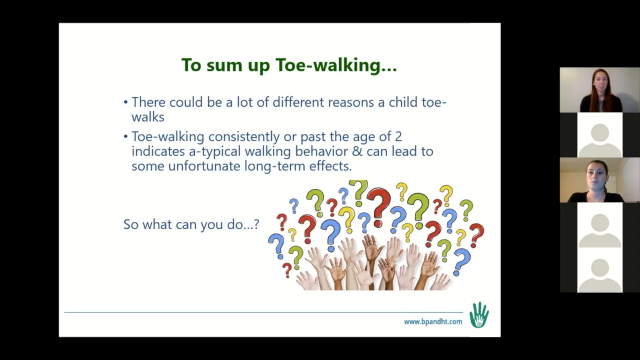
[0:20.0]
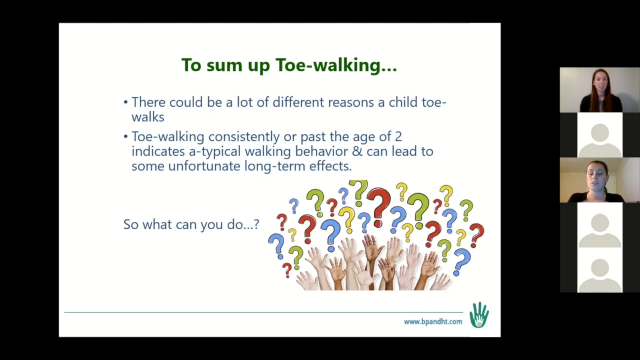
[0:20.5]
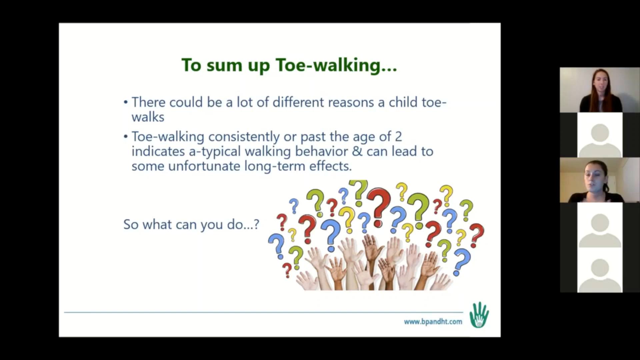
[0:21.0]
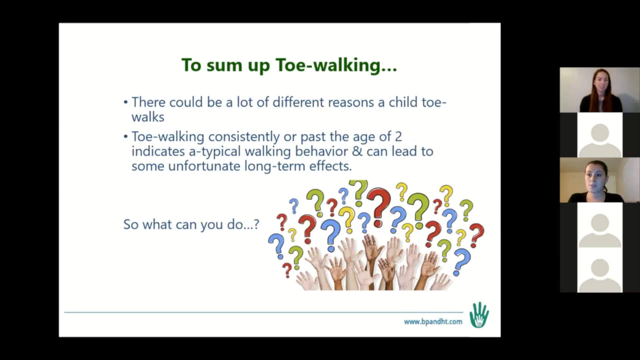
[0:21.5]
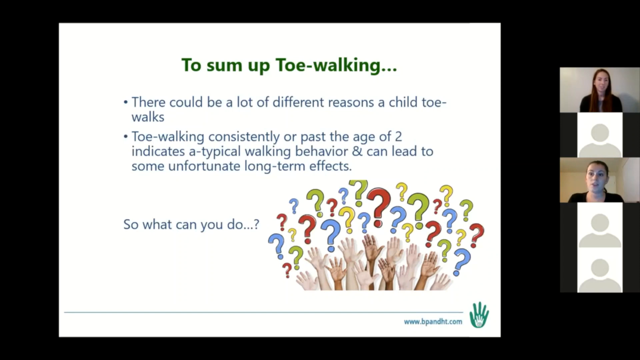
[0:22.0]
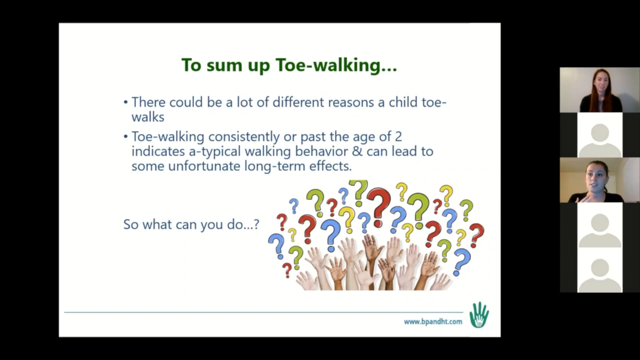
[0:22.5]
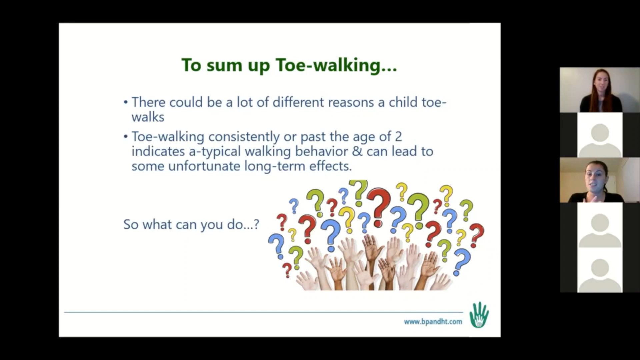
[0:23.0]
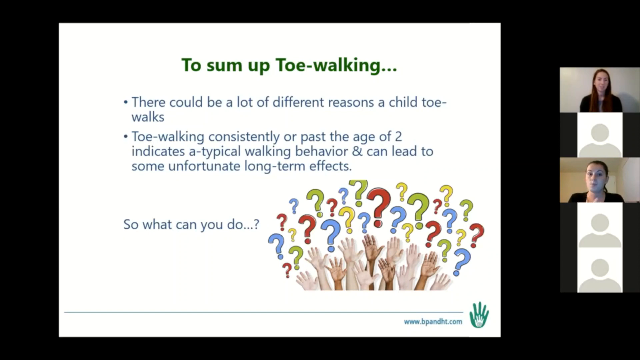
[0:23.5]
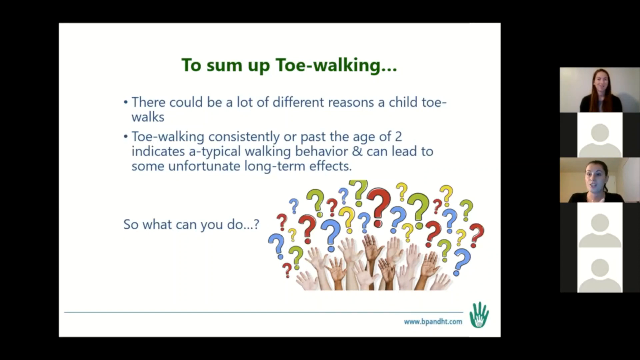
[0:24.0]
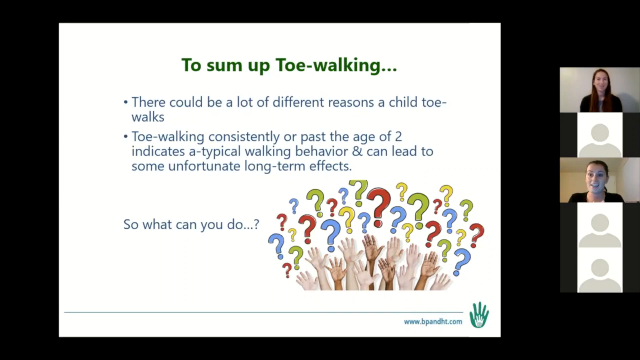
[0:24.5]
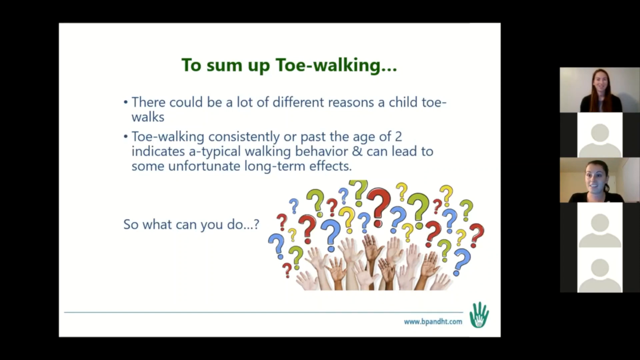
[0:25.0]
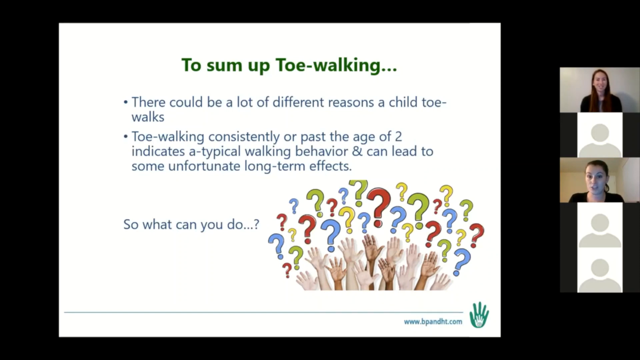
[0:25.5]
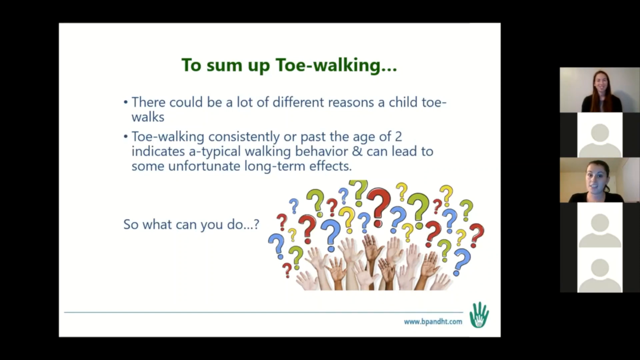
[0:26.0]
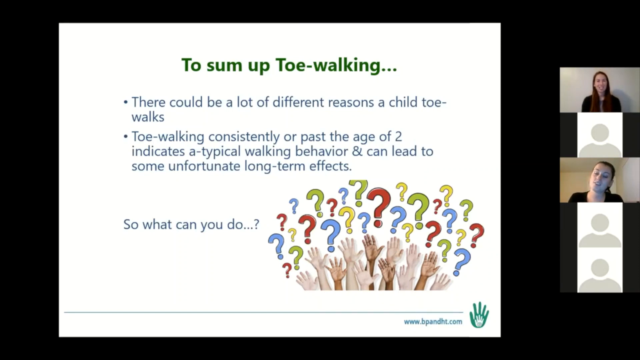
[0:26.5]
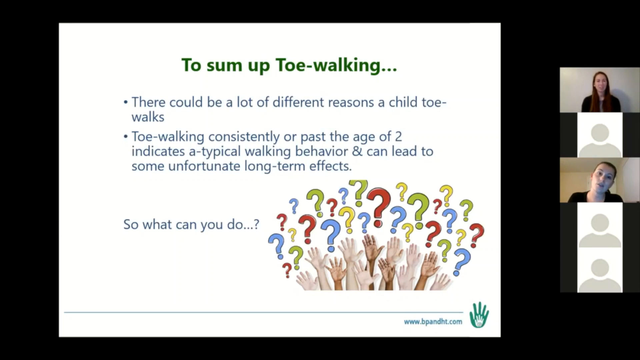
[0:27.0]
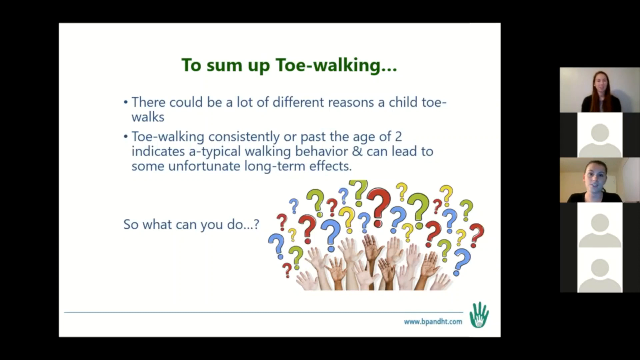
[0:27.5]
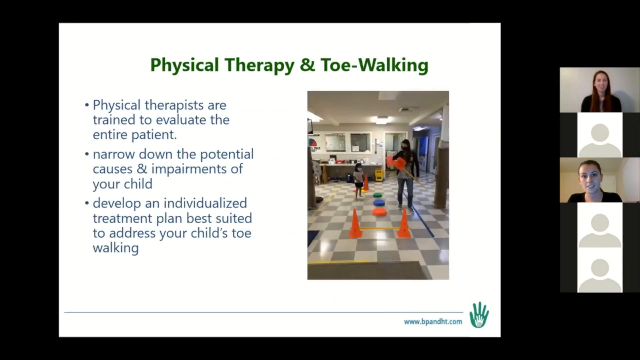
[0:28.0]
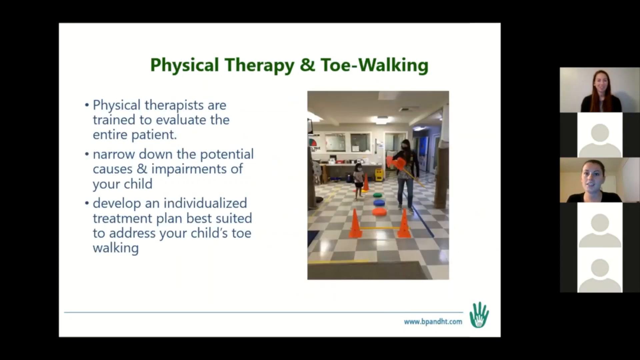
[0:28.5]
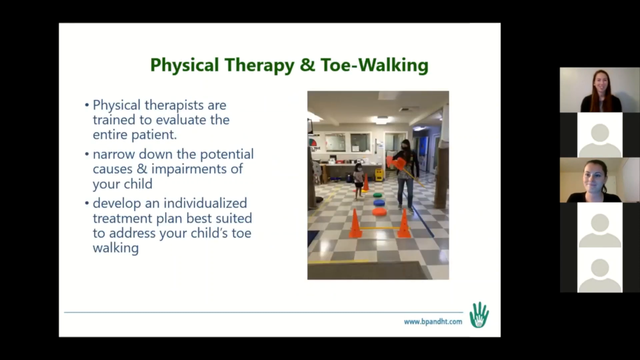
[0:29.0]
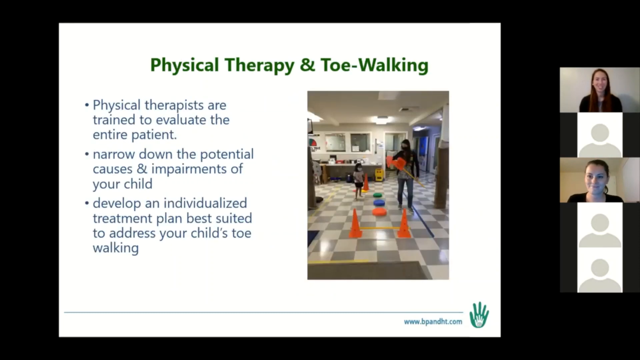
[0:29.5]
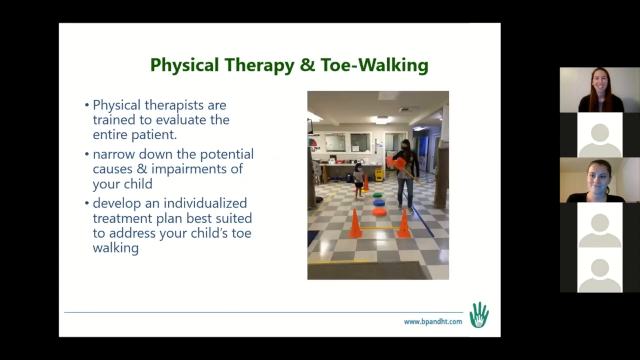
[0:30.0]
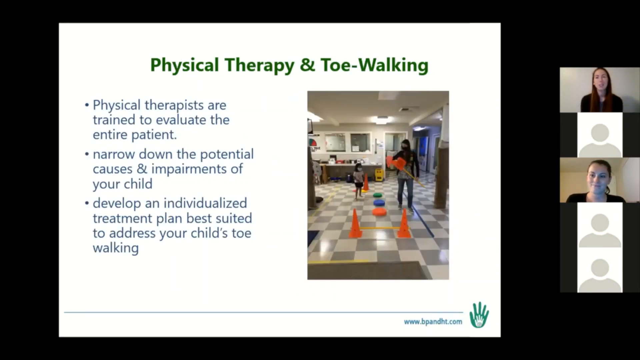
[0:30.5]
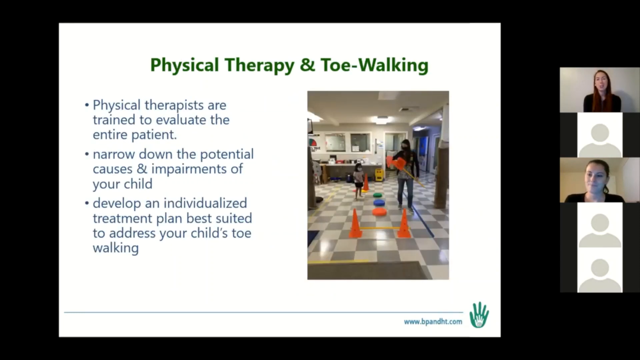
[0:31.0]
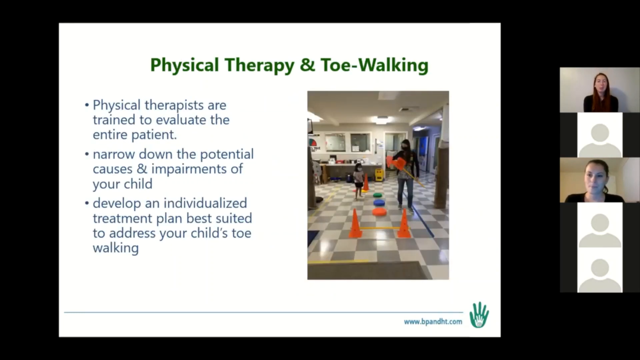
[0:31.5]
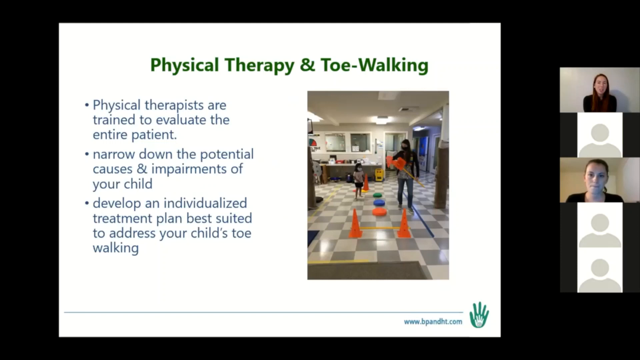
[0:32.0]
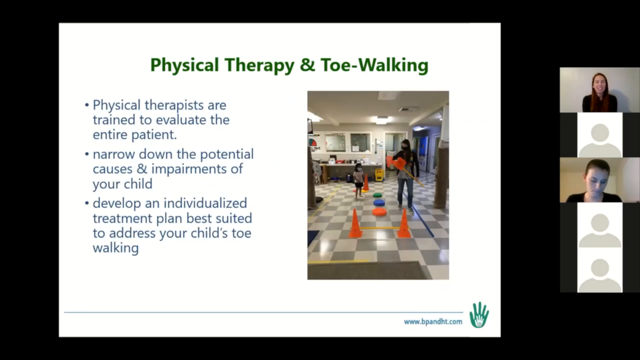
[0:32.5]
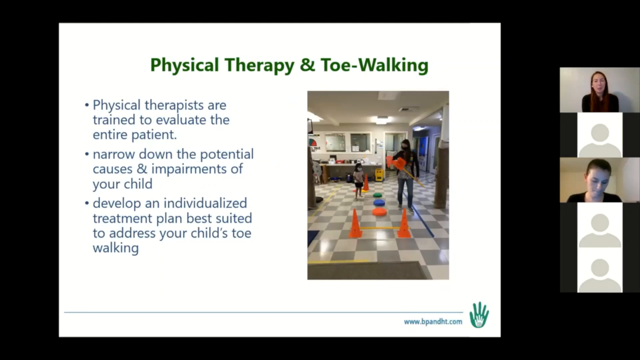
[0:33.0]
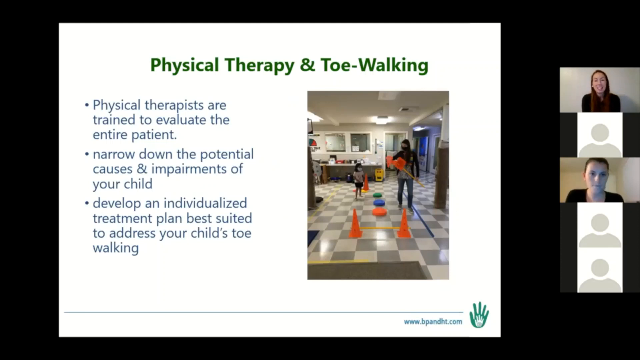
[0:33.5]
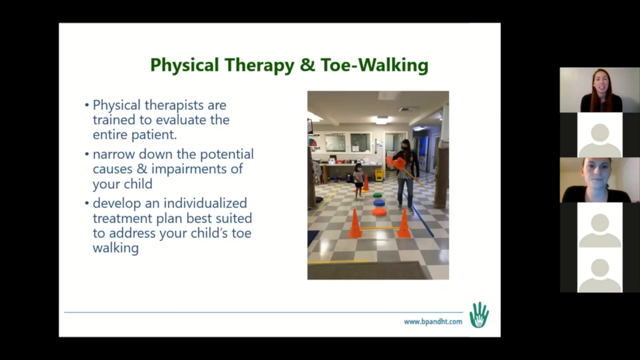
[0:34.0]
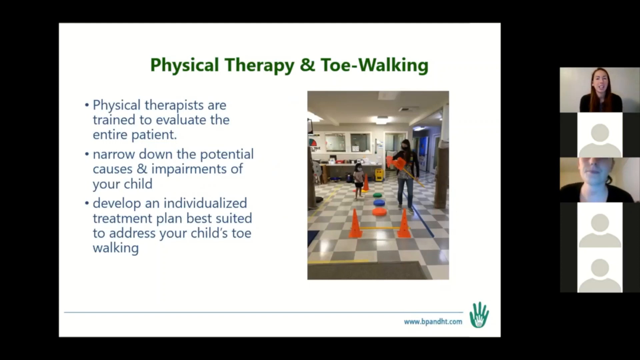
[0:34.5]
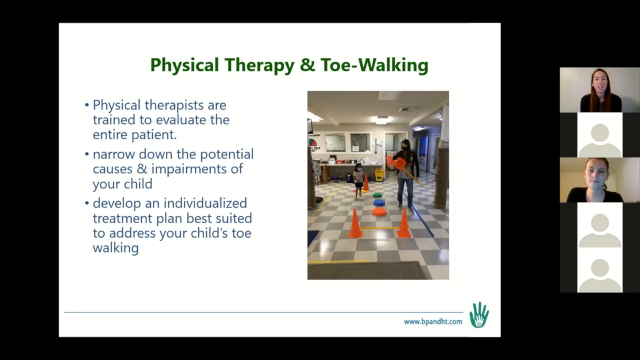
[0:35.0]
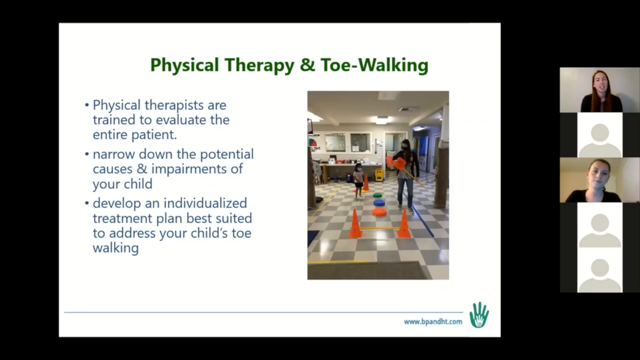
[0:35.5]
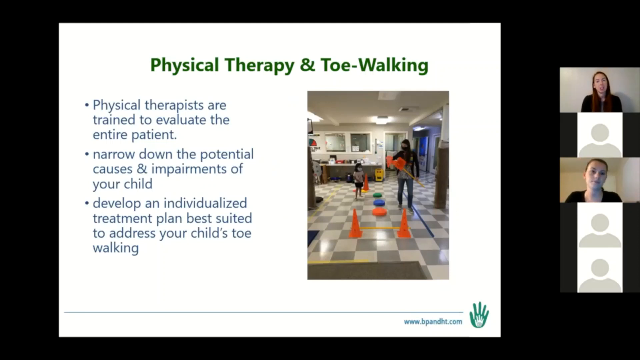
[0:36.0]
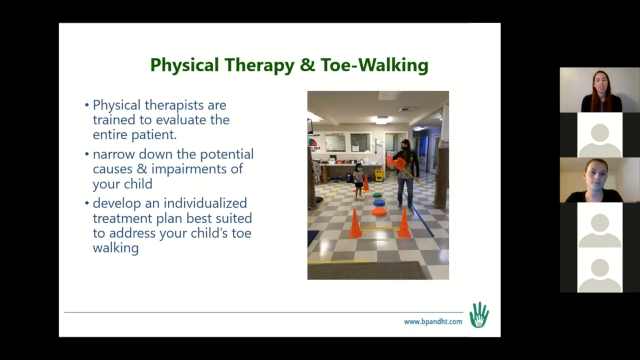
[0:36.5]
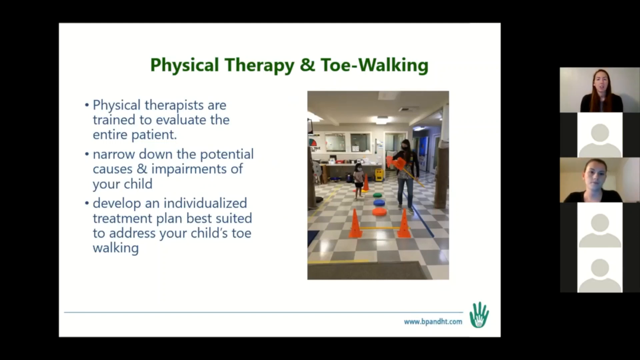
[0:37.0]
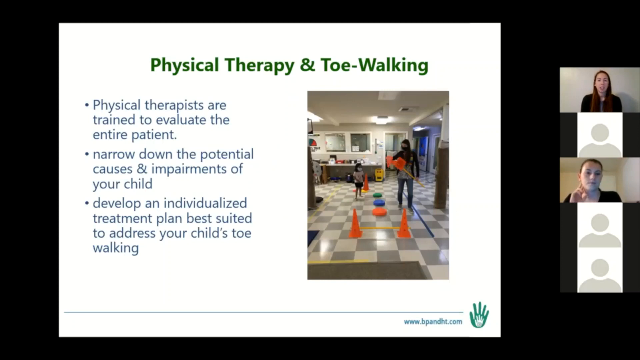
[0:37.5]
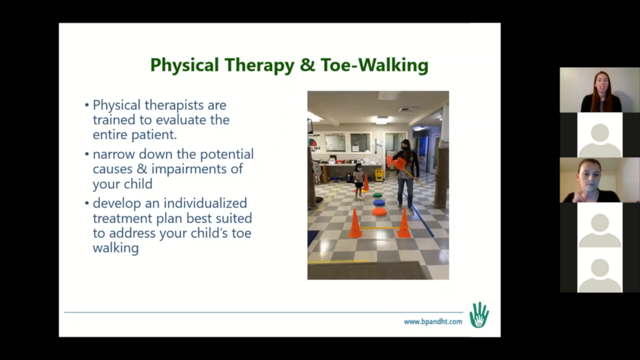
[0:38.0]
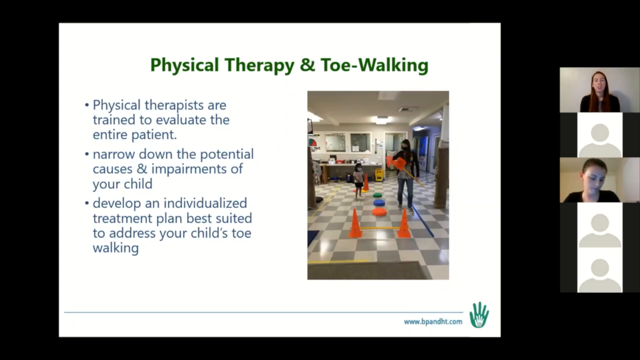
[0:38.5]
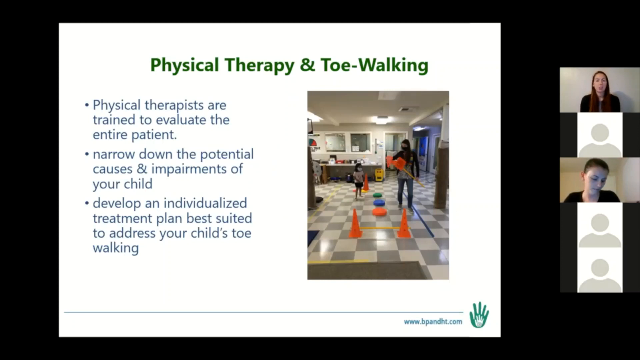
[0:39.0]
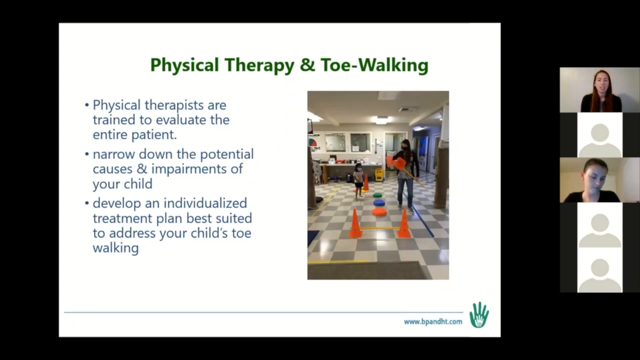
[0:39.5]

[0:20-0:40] A live video conference is on the screen, with the participants' icons stacked one on top of the other on the right side. The first is a real-life video feed of a woman, below it is a static-looking icon of a person's head, the third participant also has her live video stream showing, and the fourth and fifth participants show only icons. The slide on screen is titled "to sum up toe walking" and has two bullet points of information, plus an illustration of question marks with raised hands in the lower right corner. The third participant, a woman with a real video feed, is speaking; her head and shoulders are visible and she wears a black outfit. The first participant, also a woman, wears a black outfit too. The third participant continues to speak. The slide then changes to one titled "Physical Therapy and Toe-Walking", with three bullet points of text on the left and, on the right, an image of a floor with grey and white check pattern tiles and a small child, some orange and blue plastic cones, and an adult holding an orange object on her arm. The participants continue to speak on their live video feeds.